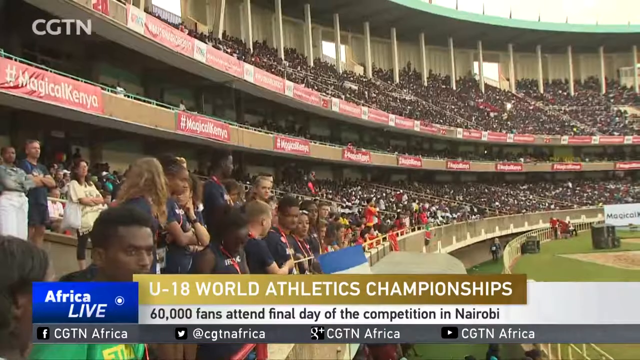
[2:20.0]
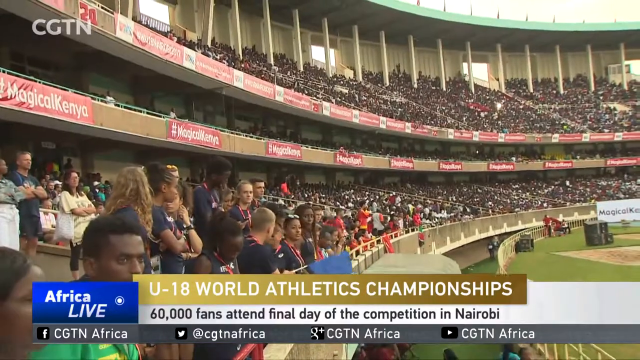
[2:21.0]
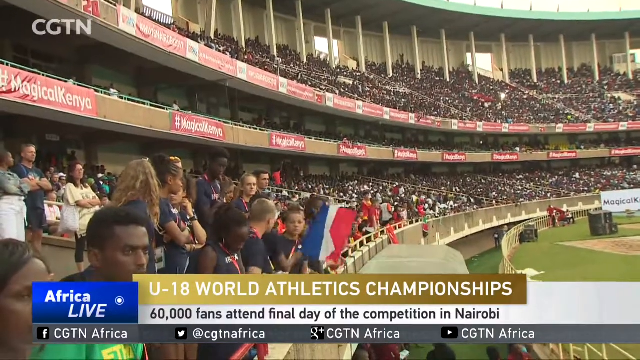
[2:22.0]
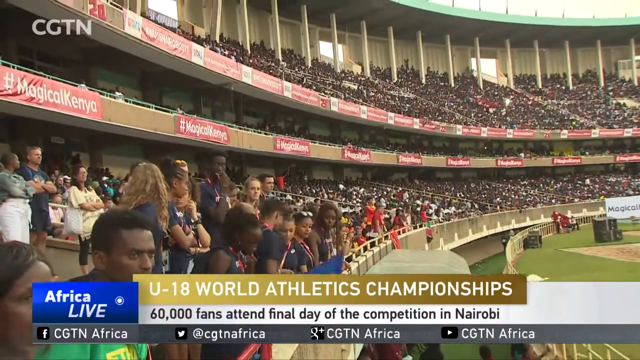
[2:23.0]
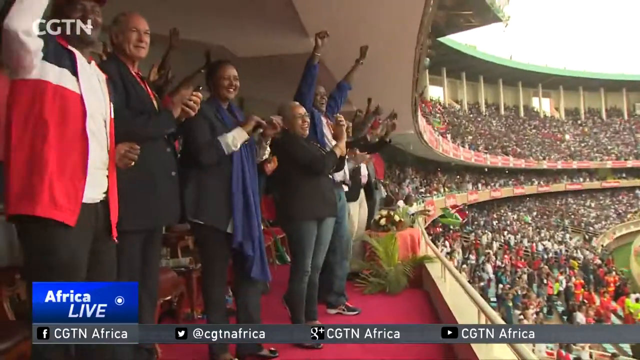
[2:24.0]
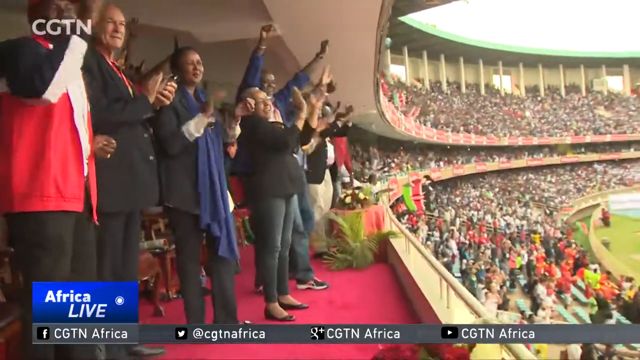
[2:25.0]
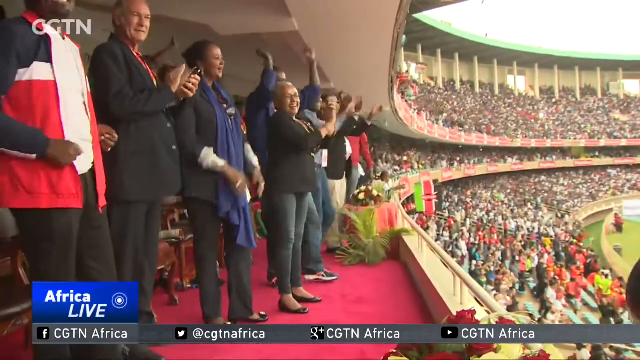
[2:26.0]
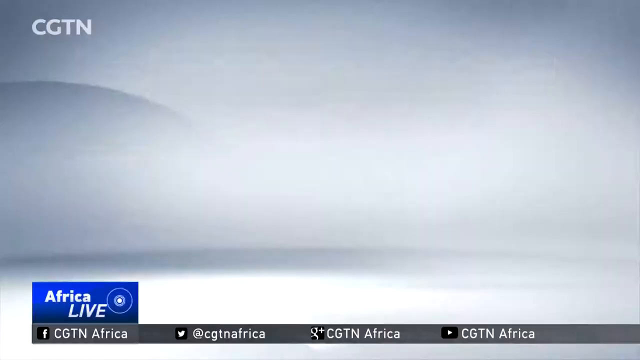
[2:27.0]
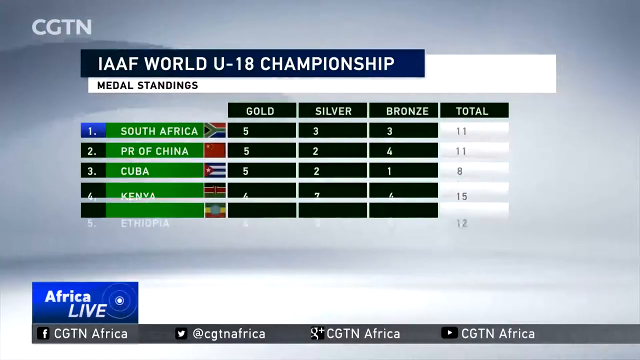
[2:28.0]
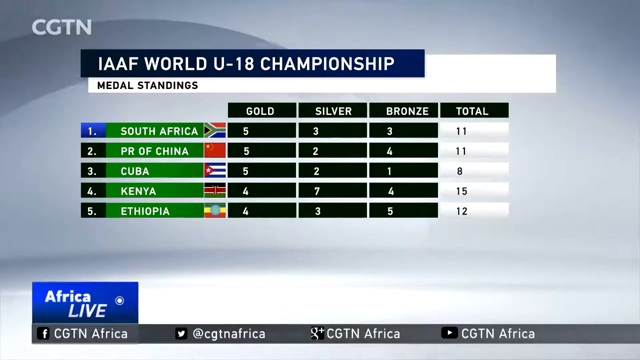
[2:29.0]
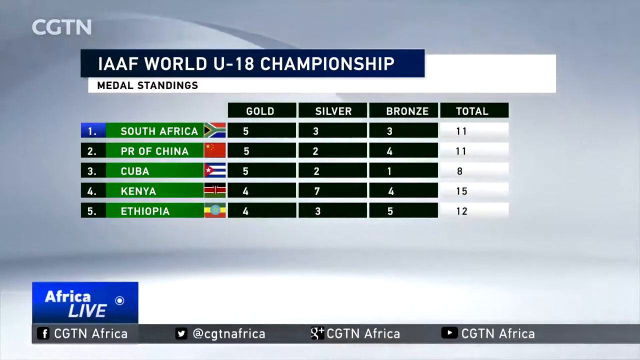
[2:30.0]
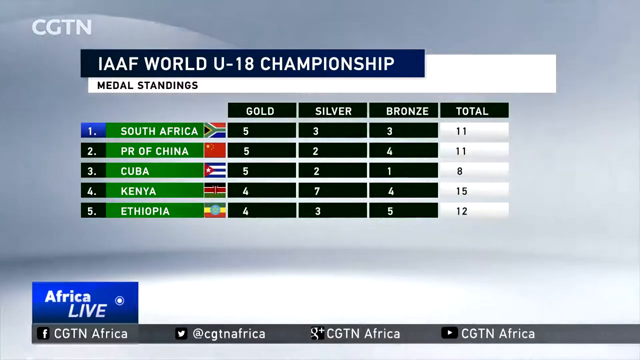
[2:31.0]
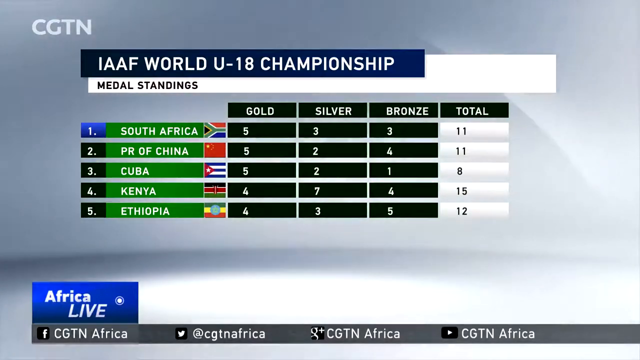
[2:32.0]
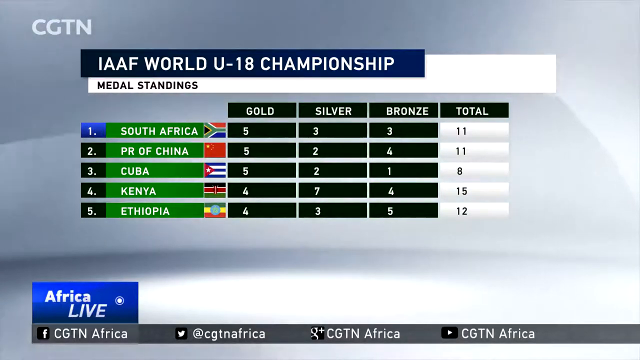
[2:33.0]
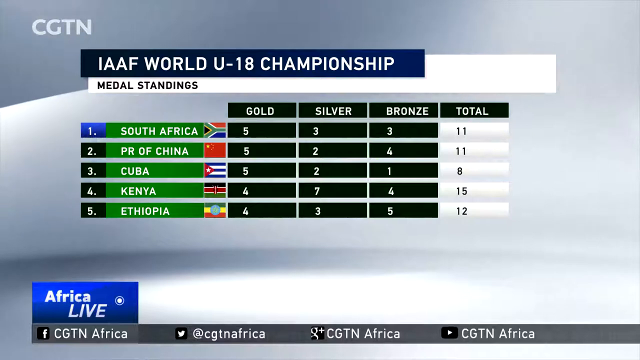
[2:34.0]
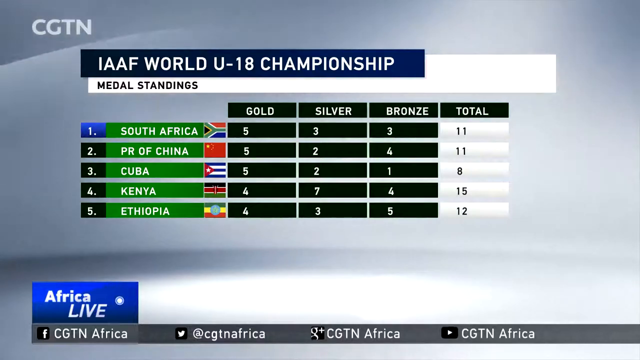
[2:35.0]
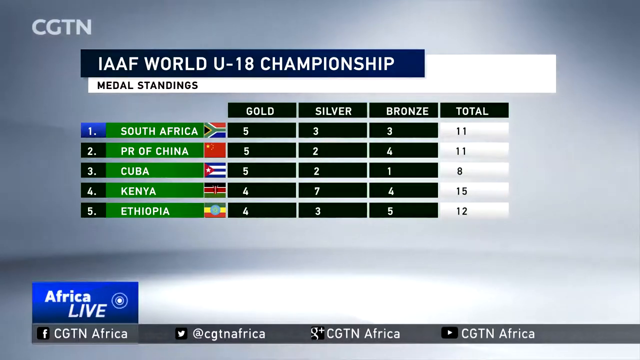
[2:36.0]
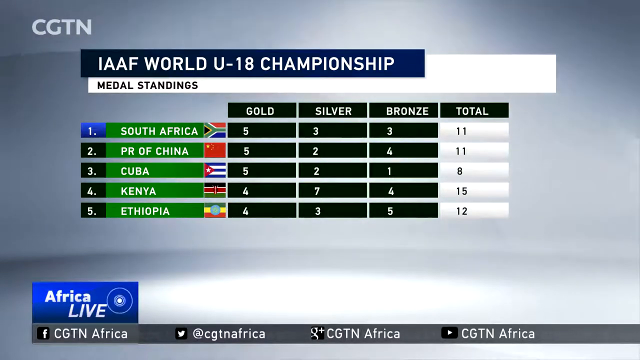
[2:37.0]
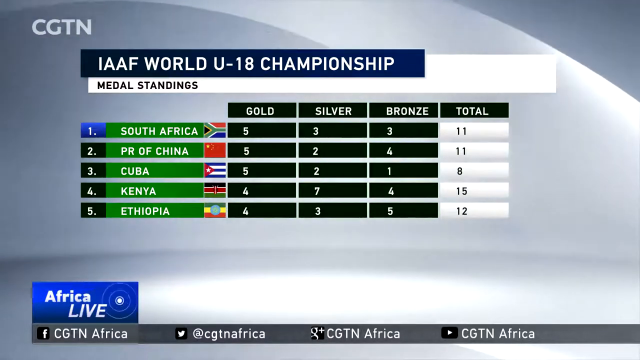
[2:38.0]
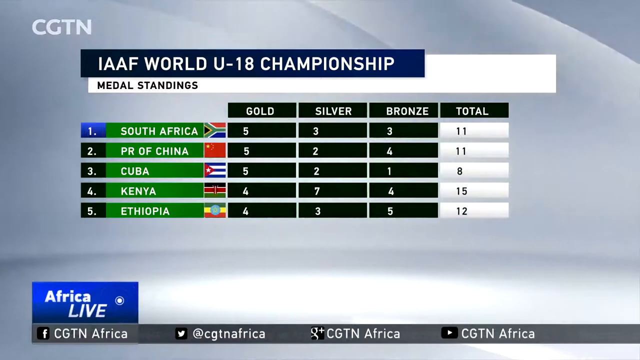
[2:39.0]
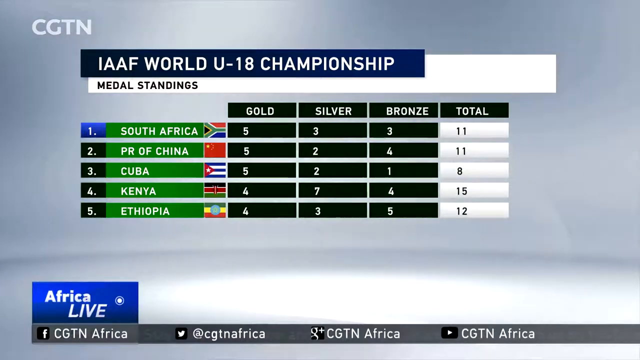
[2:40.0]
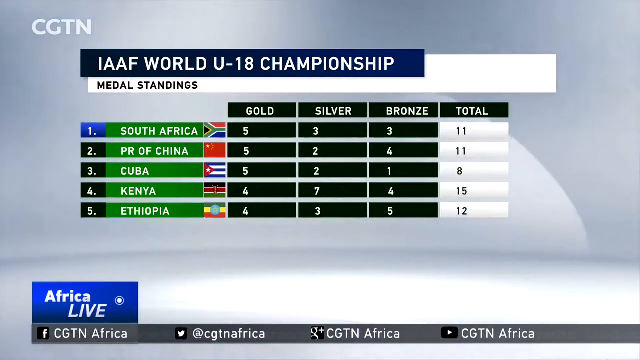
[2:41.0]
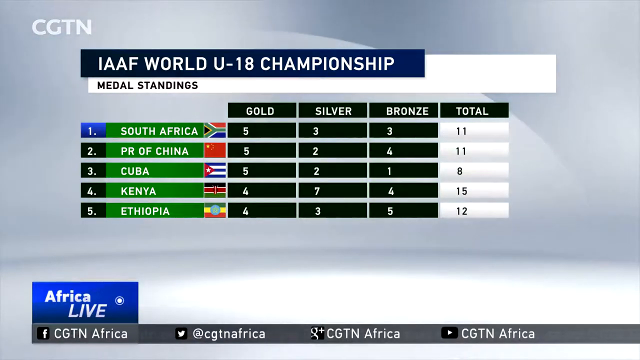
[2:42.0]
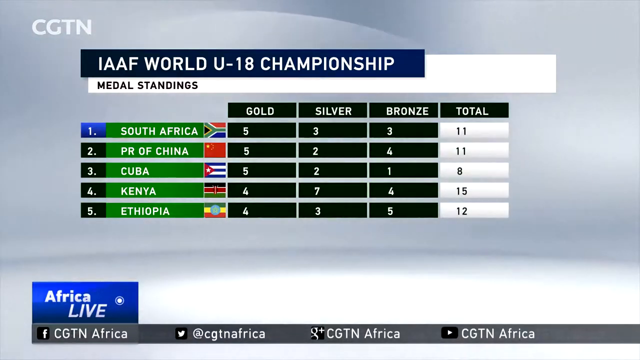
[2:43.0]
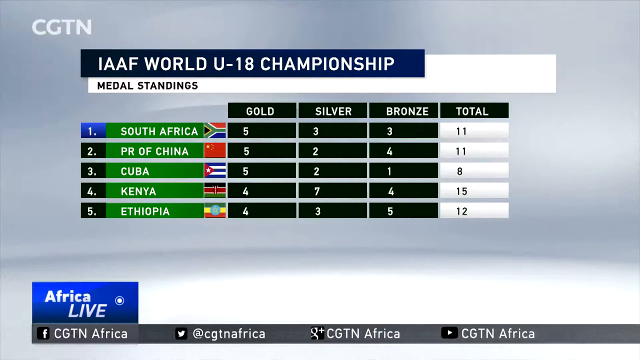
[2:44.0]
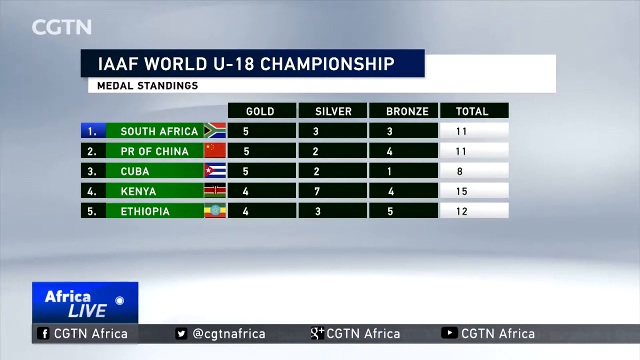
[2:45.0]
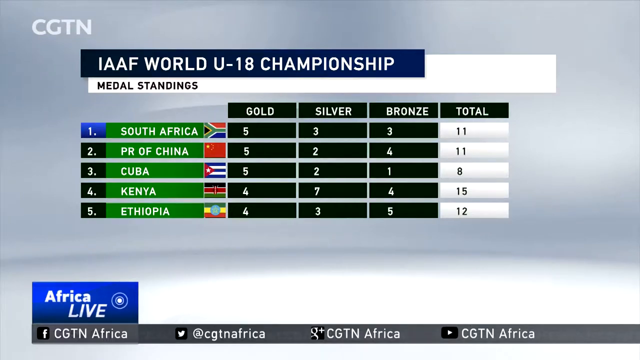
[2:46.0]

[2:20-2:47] Footage of the U18 World Athletics Championships, possibly previously recorded, is shown on CGTN, with "CGTN" in white text in the upper left corner. A banner at the lower left reads "Africa Live" in white text, and to the right it reads "U18 World Athletics Championships." Below that, a white banner reads in black text "60,000 fans attend final day of the competition in Nairobi." In the background, the stands are filled across three levels, up to the top of the third level of seats. Banners show advertisers, one apparently reading "magical Kenya." It is daytime, with a bright sky above. Many fans wave flags, and then there is a close-up of people standing and clapping. Then the medal standings from the IAAF World U-18 Championship appear against a grayish white background: number one is South Africa with five gold, three silver and three bronze for a total of 11, followed by China, Cuba in third, Kenya in fourth and Ethiopia in fifth.